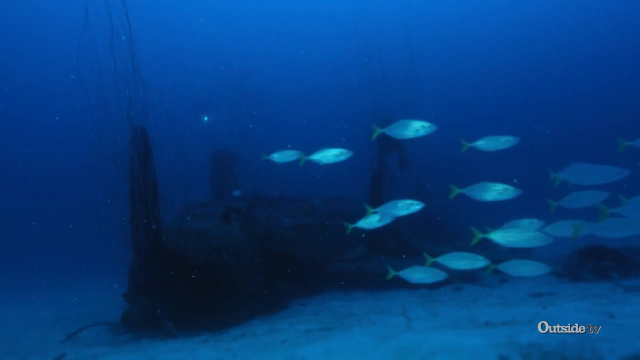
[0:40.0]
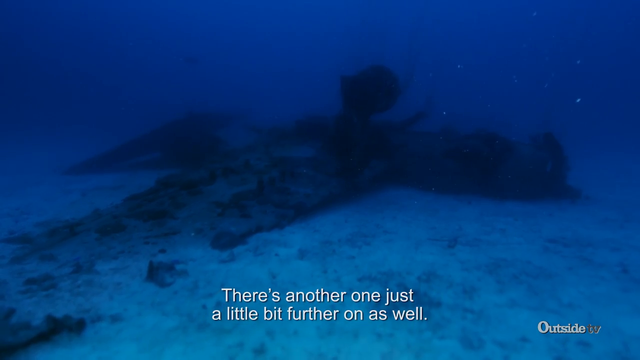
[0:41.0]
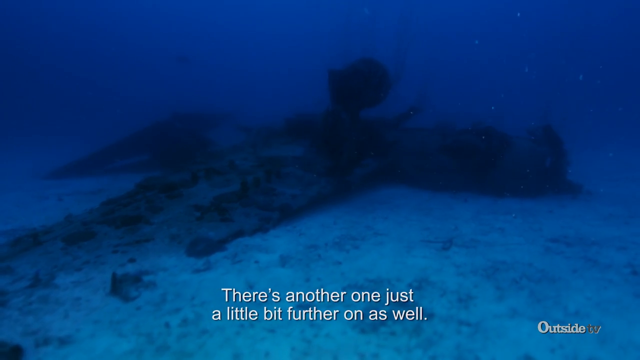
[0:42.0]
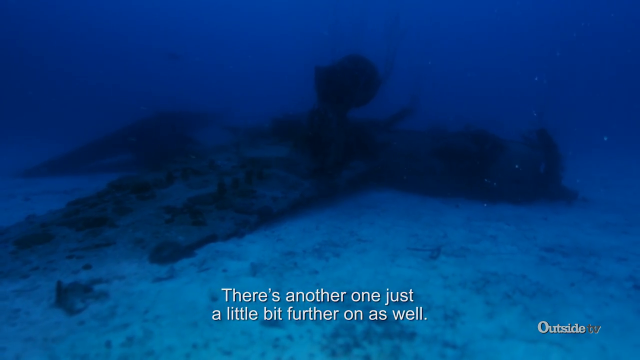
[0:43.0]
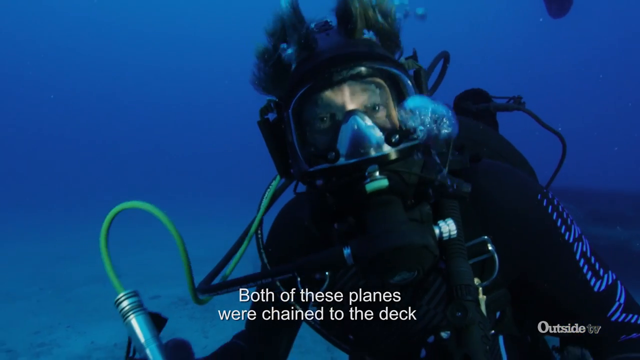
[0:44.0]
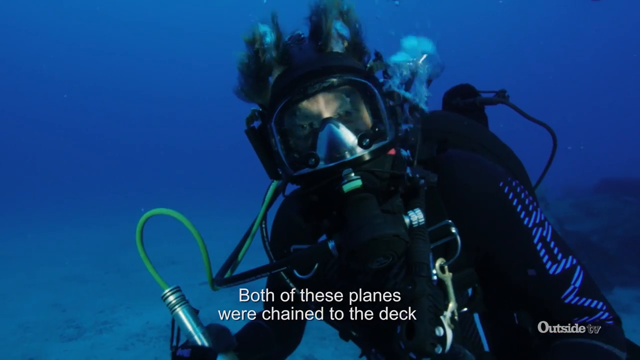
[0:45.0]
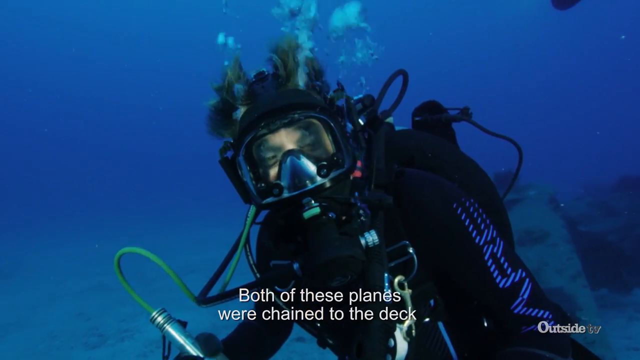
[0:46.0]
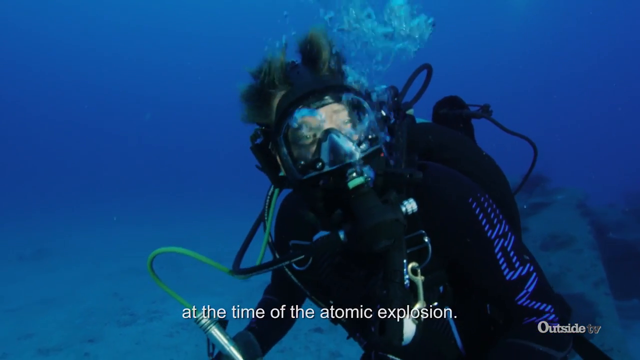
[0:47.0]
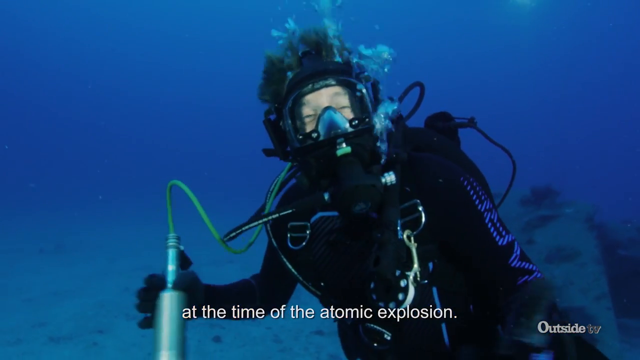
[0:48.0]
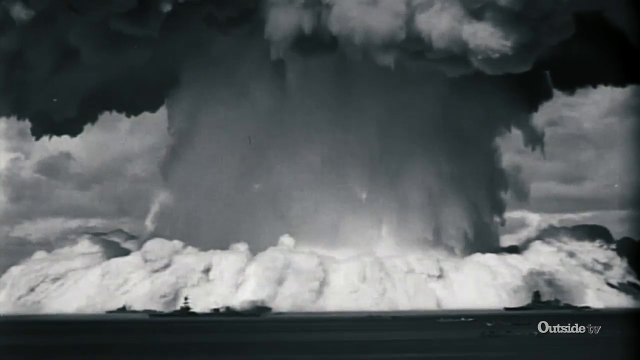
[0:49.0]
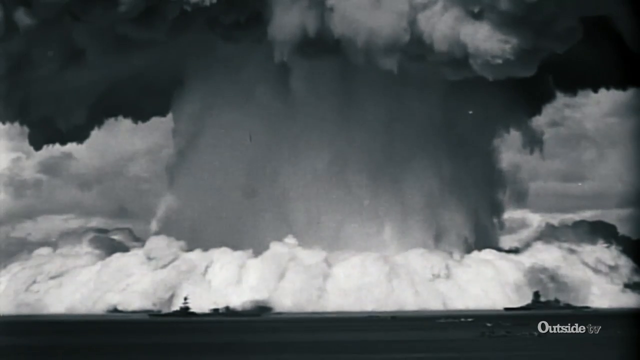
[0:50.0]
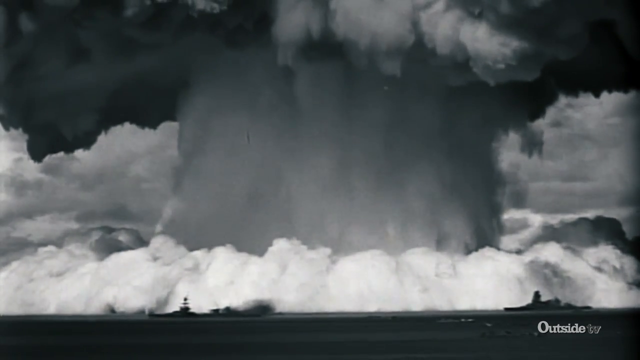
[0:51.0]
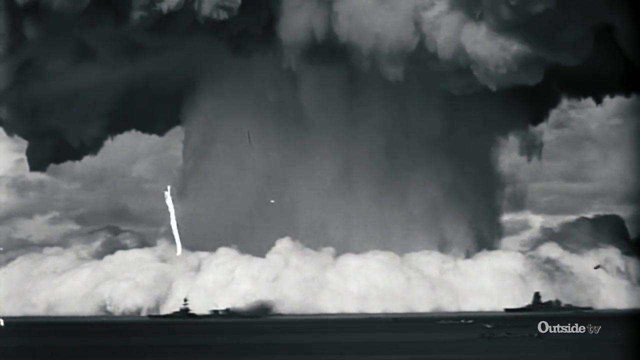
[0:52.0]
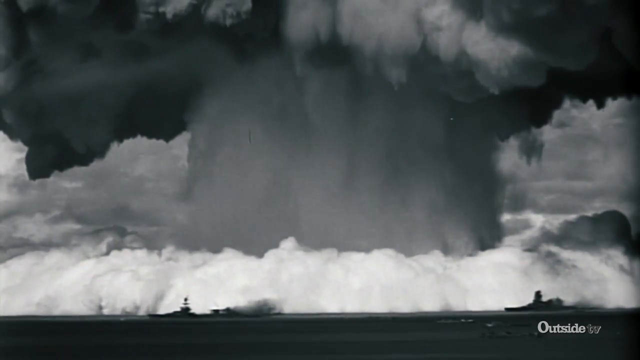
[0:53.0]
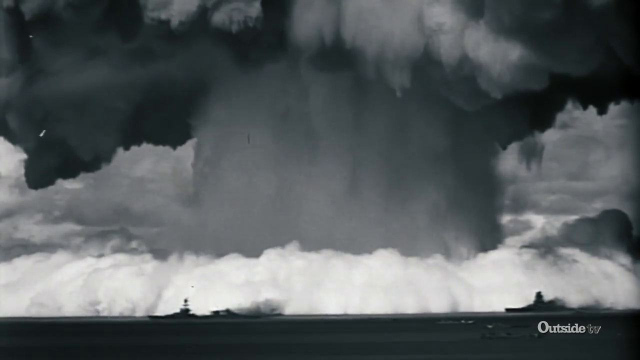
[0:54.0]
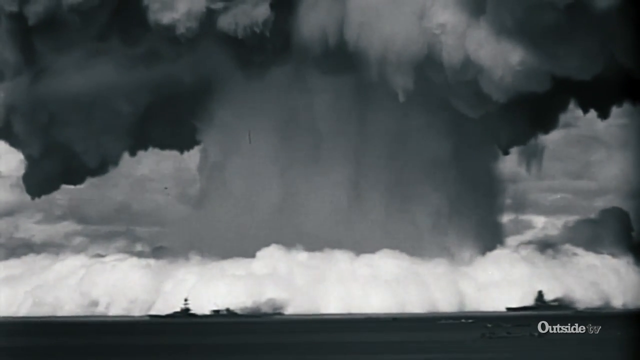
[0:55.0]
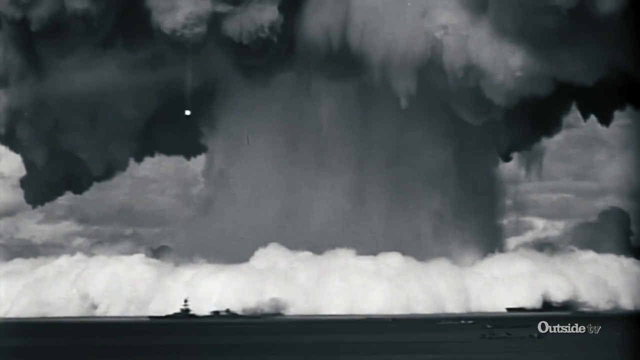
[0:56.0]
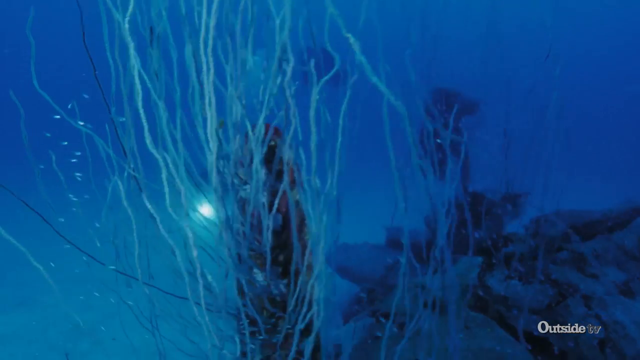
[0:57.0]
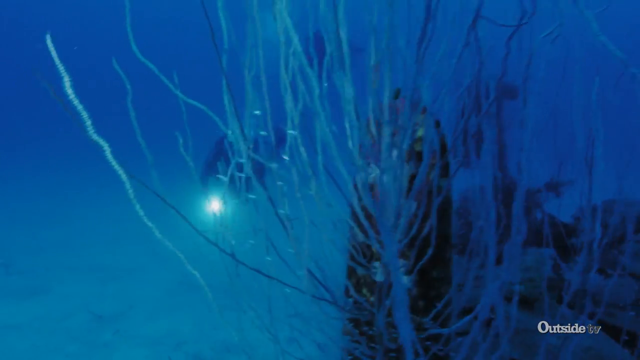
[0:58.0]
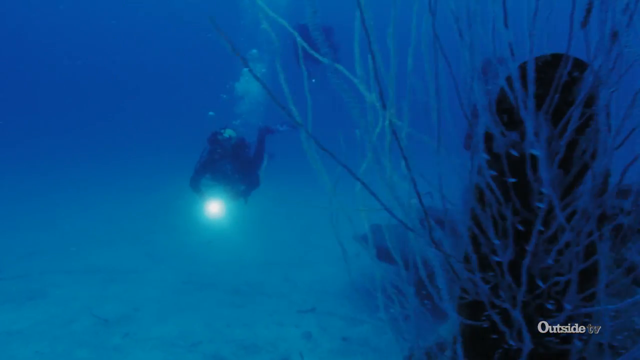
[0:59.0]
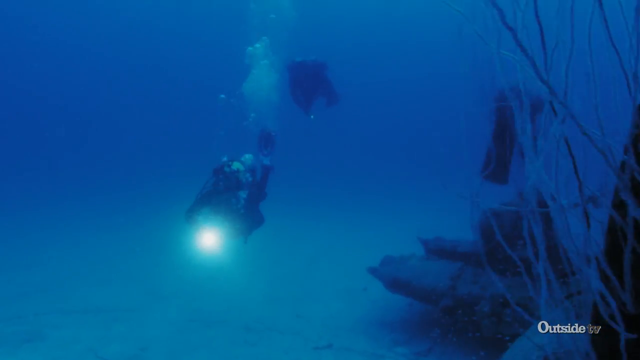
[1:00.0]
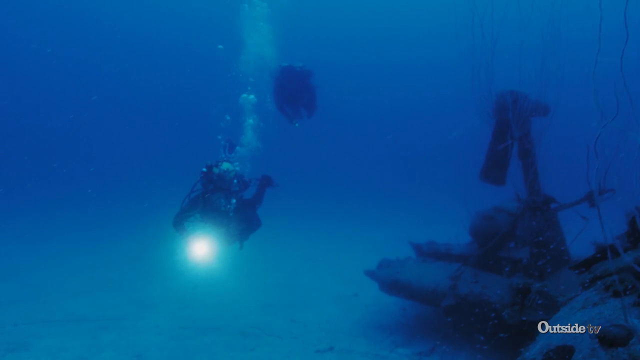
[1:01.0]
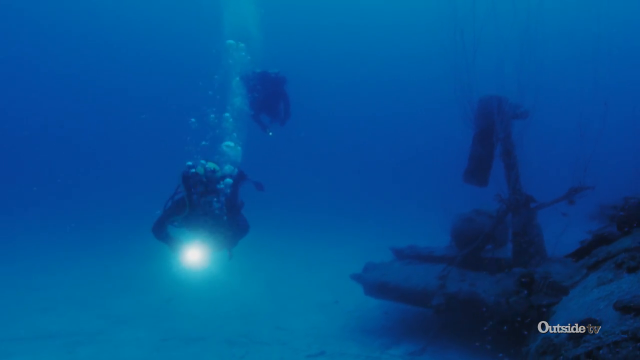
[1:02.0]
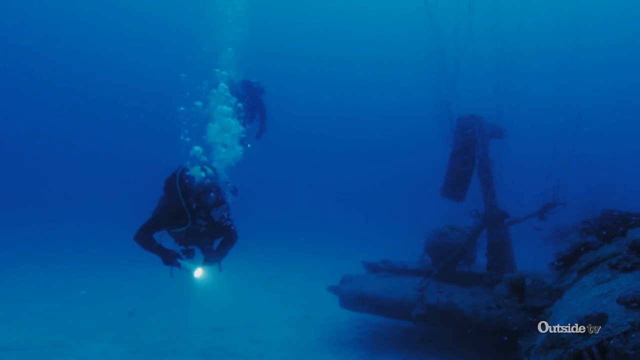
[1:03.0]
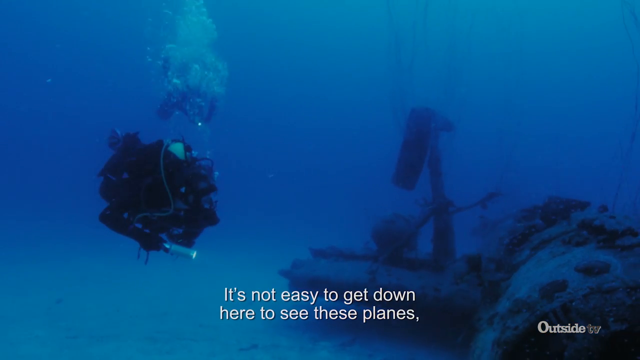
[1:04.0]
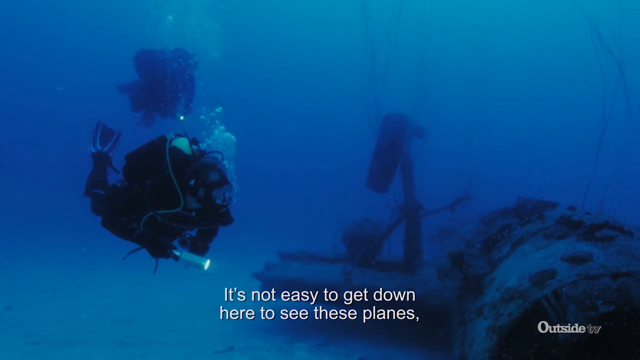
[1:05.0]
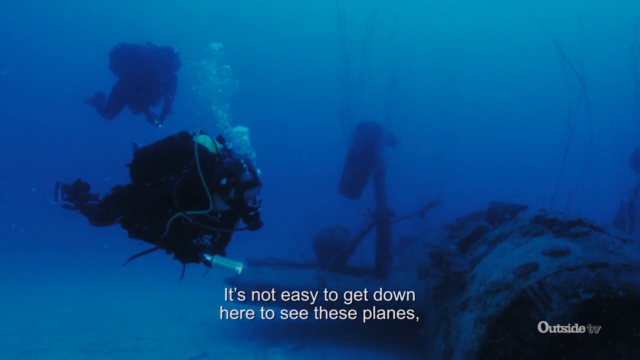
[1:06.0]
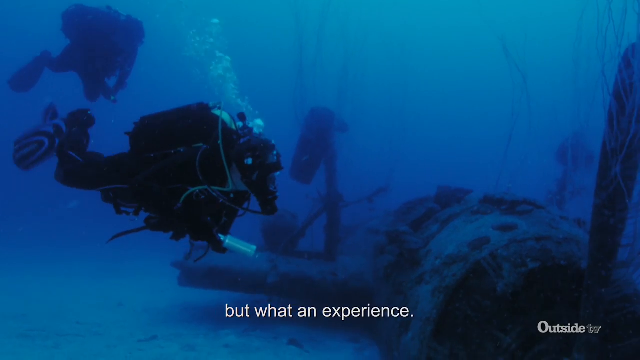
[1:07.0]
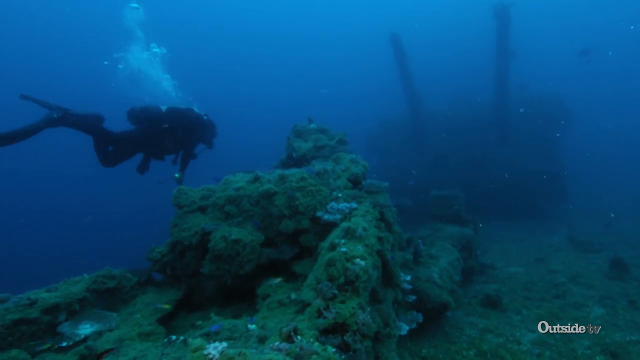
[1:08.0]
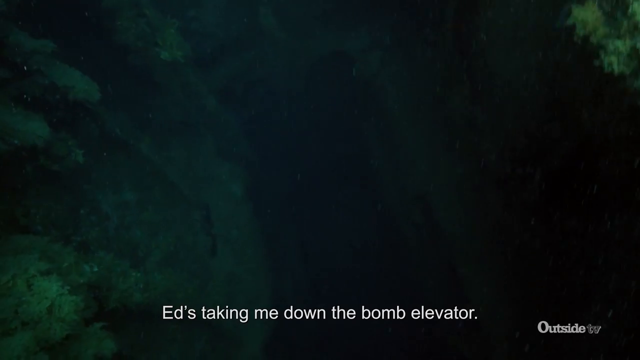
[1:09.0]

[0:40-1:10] An underwater shot shows a number of fish swimming past. A different angle follows, with white text at the bottom stating "There's another one just a little bit further on as well.", as the camera moves around an object lying on the ocean bed. The shot cuts to a close-up of a man in scuba equipment with a mask over his head, looking towards the camera, with white text at the bottom reading "Both of these planes were chained to the deck at the time of the atomic explosion." The view changes to an atomic explosion, with clouds or dust coming towards a couple of ships sitting on the water. Another underwater shot follows, the camera going past a few plants before showing a man scuba diving next to an object, with white text reading "It's not easy to get down here to see these planes, but what an experience". The shot changes to a man swimming past a reef, and white text states "Ed's taking me down the bomb elevator."